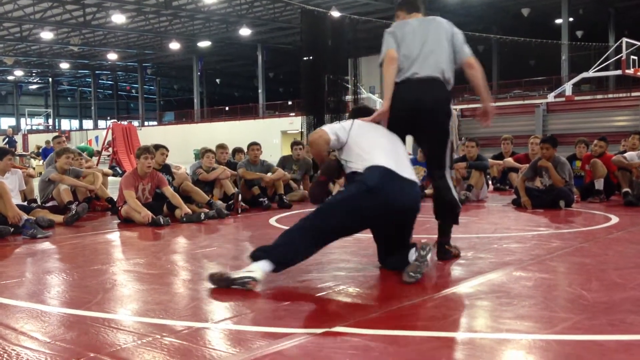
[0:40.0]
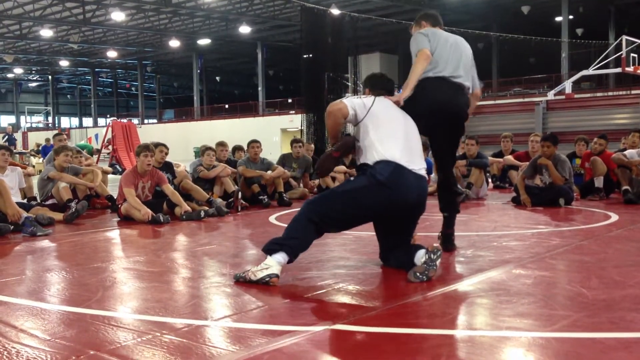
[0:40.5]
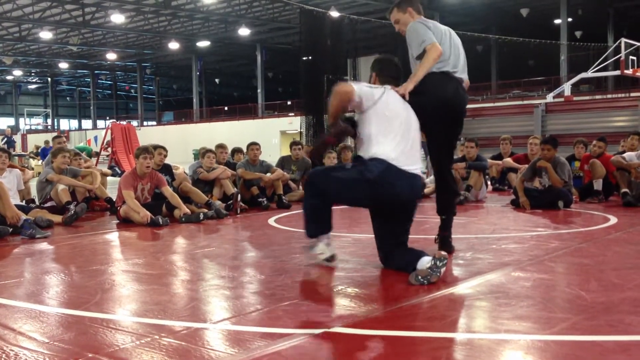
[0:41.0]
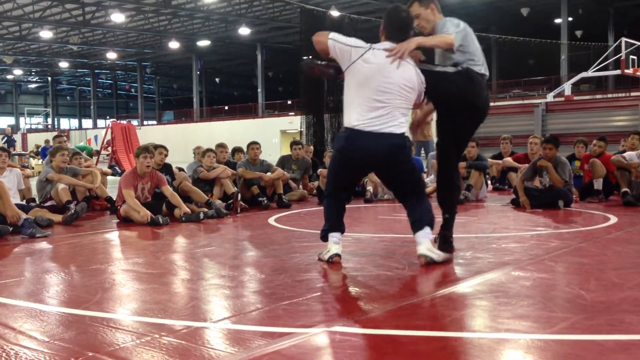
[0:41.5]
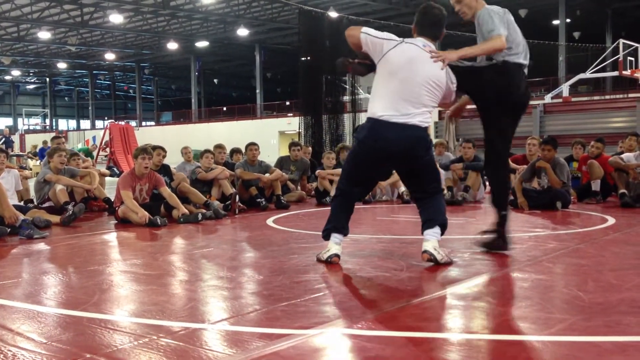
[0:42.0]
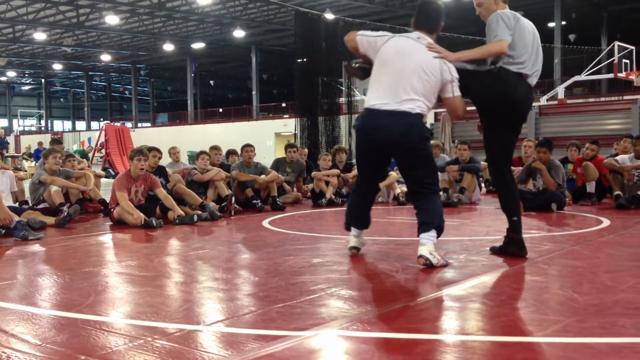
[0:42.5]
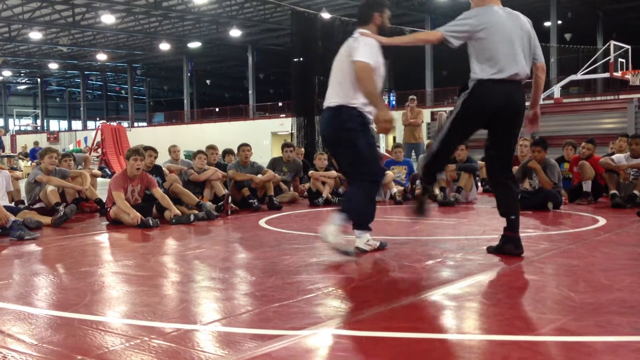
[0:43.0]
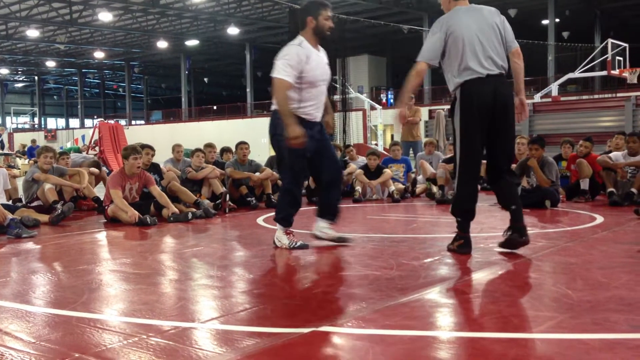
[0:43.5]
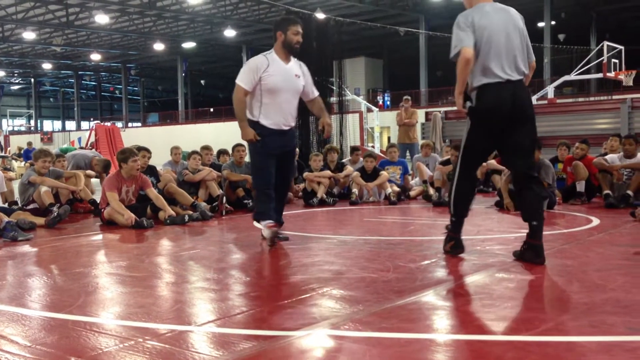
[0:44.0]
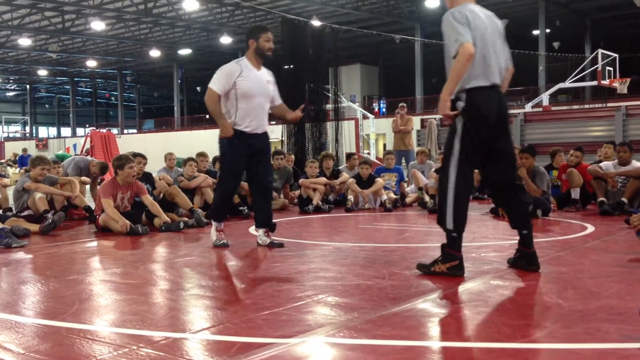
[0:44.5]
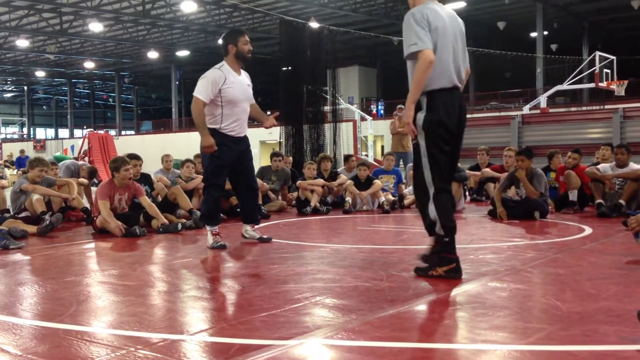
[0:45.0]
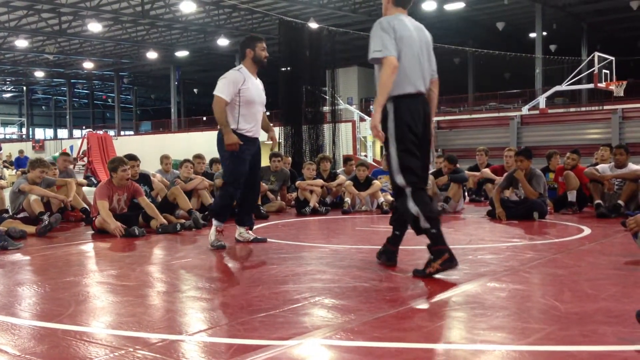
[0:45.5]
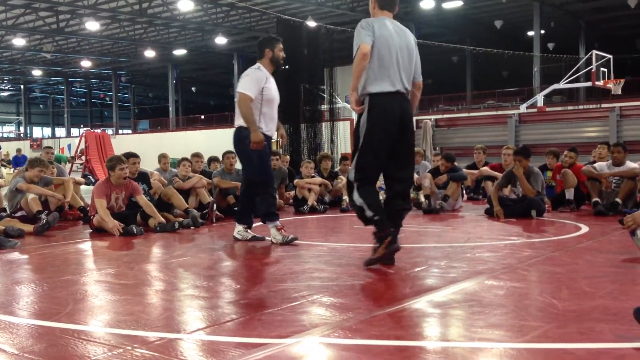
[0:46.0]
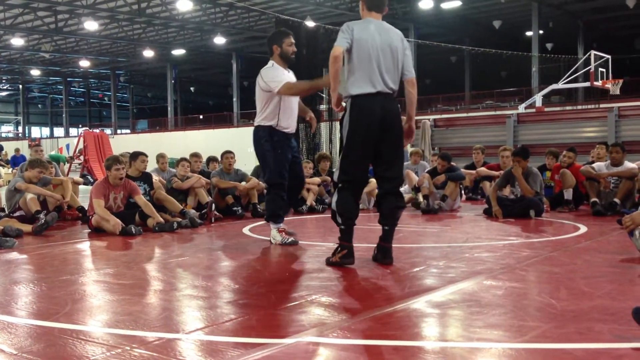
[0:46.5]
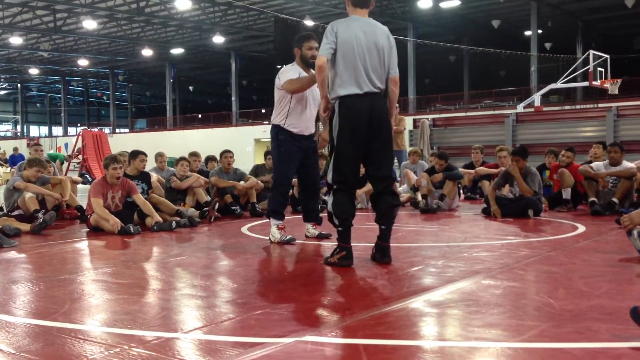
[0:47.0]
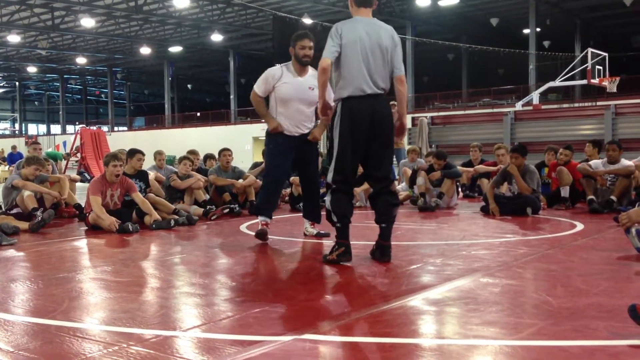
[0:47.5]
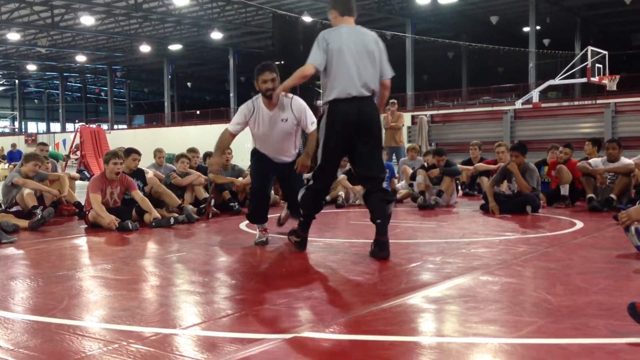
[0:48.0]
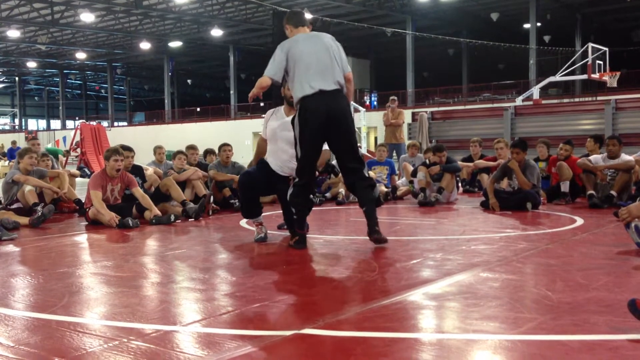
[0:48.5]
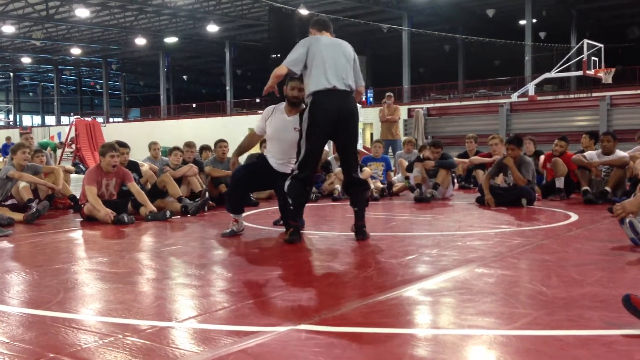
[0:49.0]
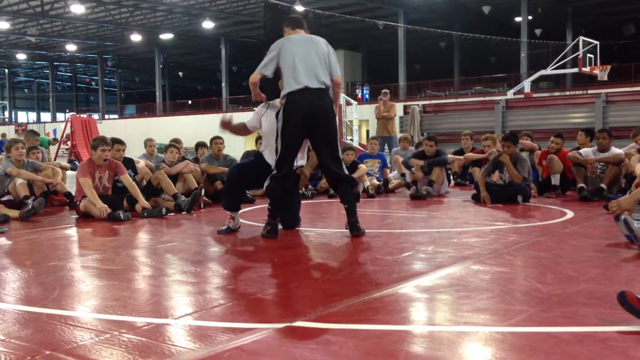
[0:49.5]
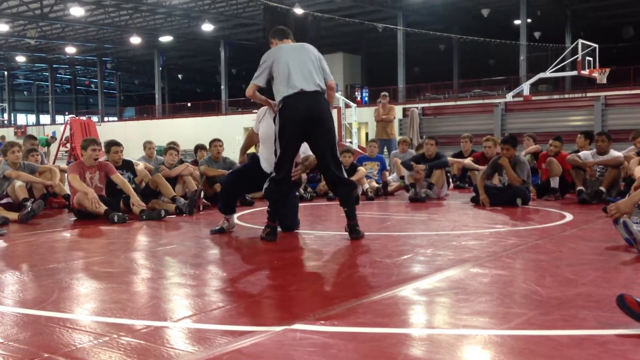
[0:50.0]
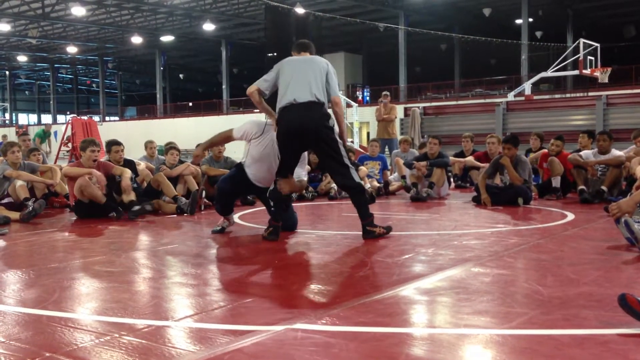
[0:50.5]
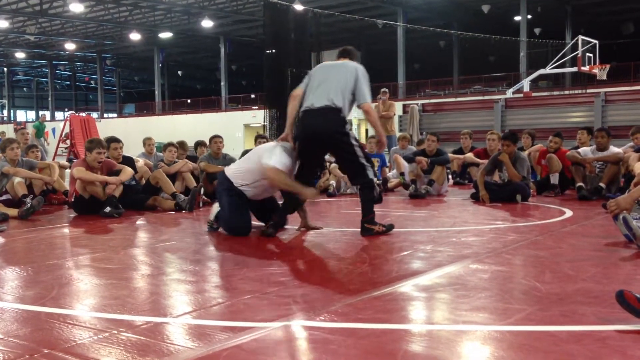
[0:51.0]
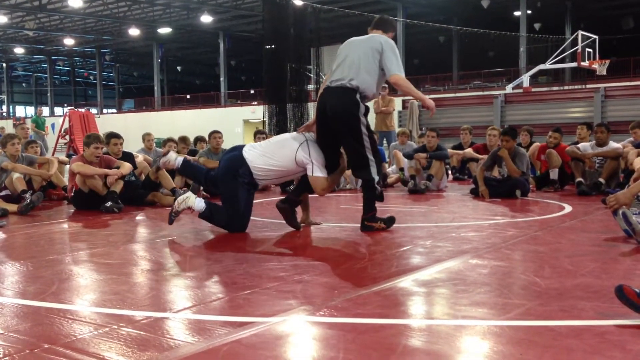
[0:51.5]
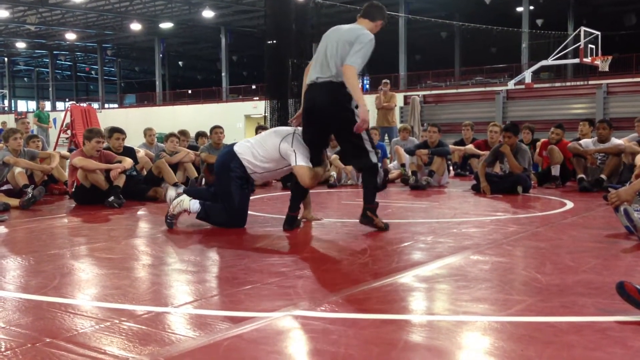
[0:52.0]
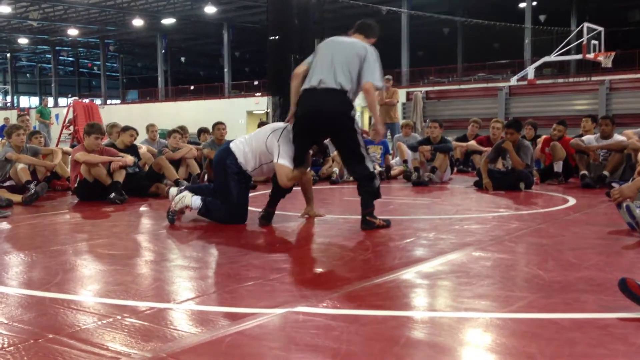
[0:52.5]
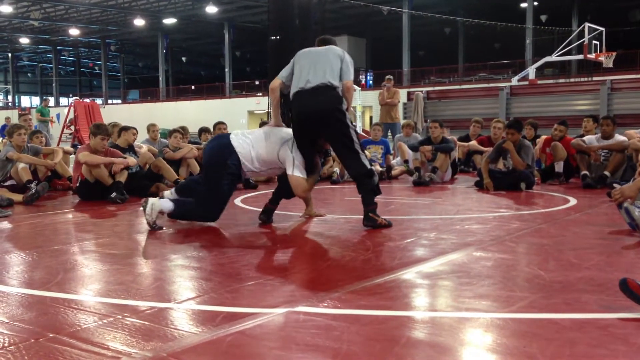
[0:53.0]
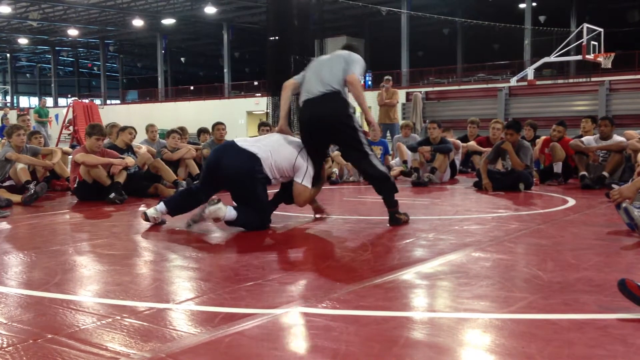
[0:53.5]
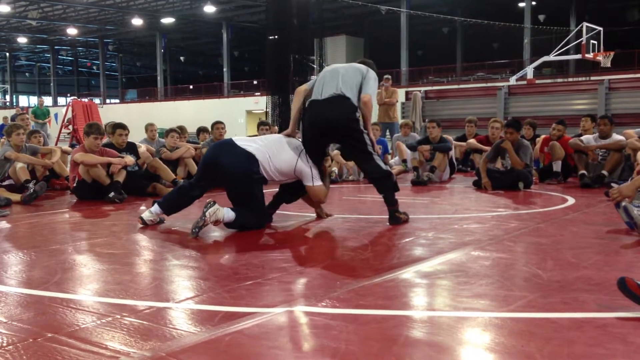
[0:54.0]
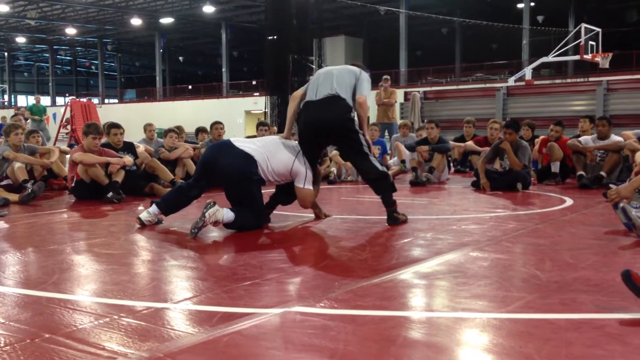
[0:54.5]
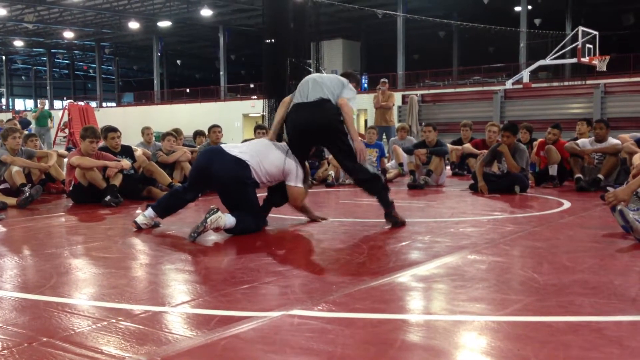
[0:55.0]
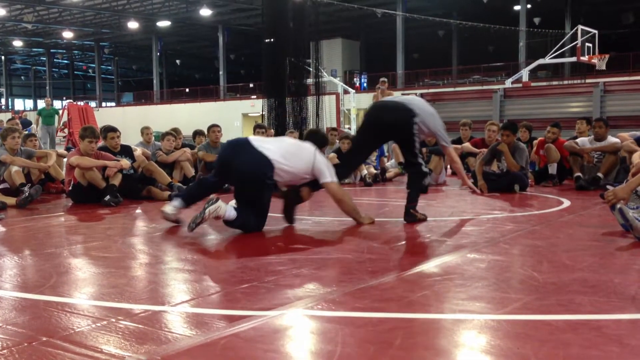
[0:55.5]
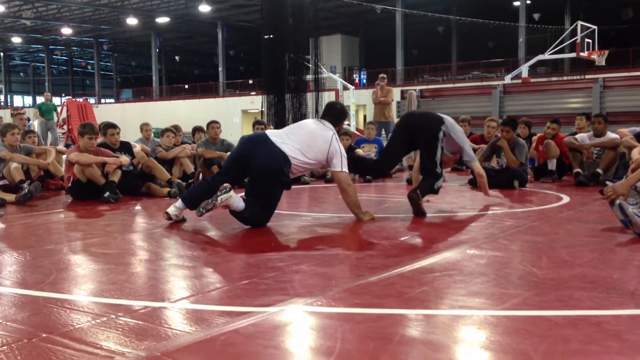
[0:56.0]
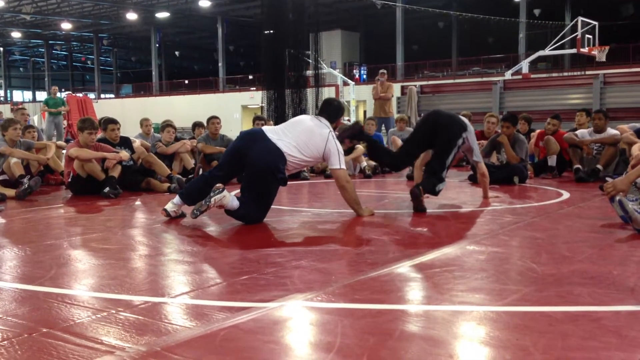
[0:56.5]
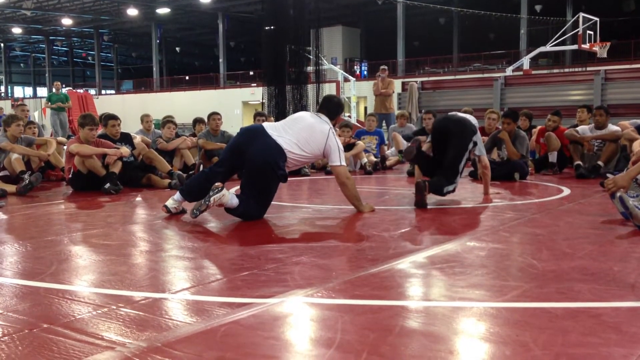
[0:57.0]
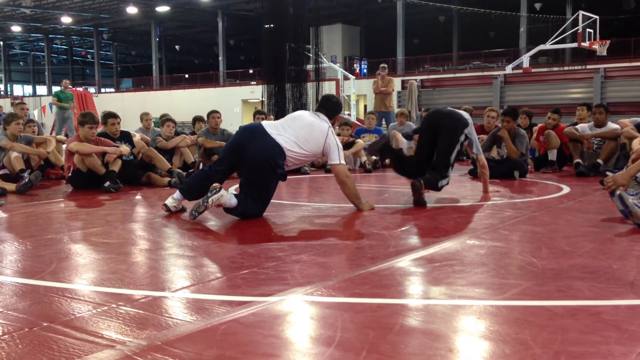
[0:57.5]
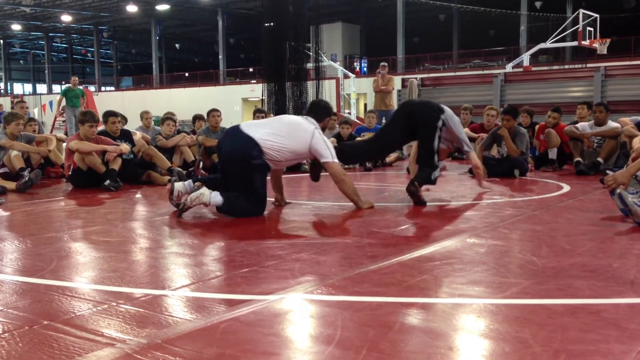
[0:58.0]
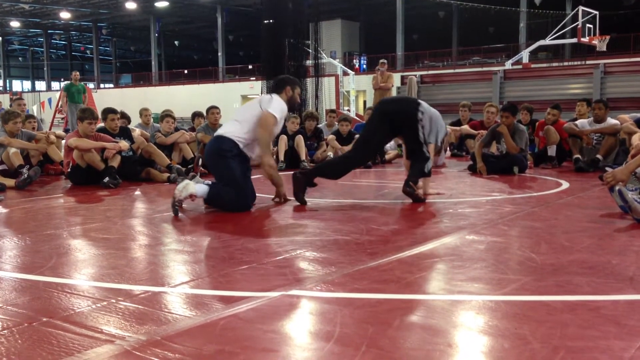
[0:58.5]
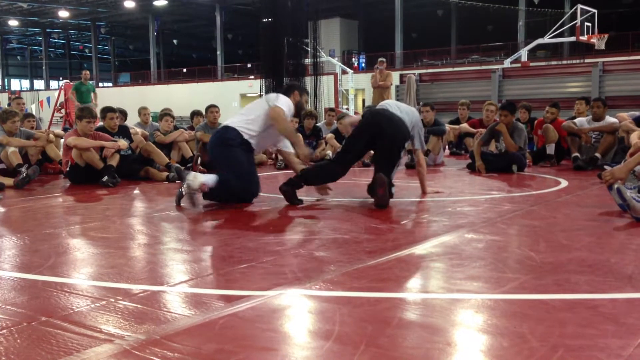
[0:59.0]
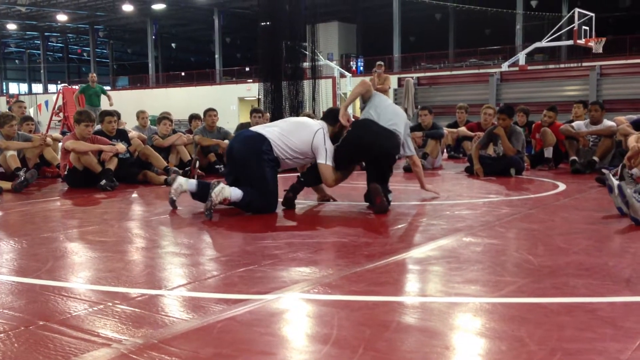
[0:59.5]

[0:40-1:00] The man in white is behind the man in gray with his right arm wrapped around his lower leg, kneeling on his right knee with his left leg extended. He lifts the man in gray's left leg off the ground and attempts to throw him off balance while the man in gray hops on his right leg. He then releases him, they separate, and they talk to the boys in the crowd. The man in white gets down onto his right knee while the man in gray puts his hand on his right shoulder, and the man in white puts his left hand on the back of the man in gray's left knee. He then again wraps his right arm around the man in gray's left knee as they demonstrate a wrestling position for the boys in the circle. The man in gray falls forward onto both hands with his left leg lifted in the air, then pulls his leg back so the man in white has access to it again. The man in white then gets into position to show the boys the proper position for the wrestling technique.